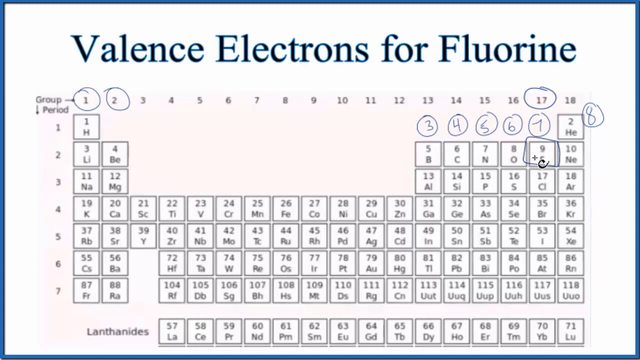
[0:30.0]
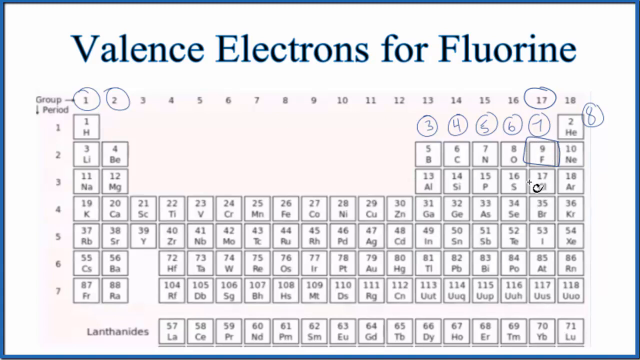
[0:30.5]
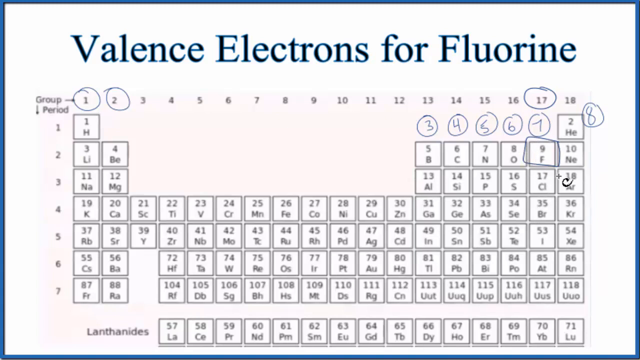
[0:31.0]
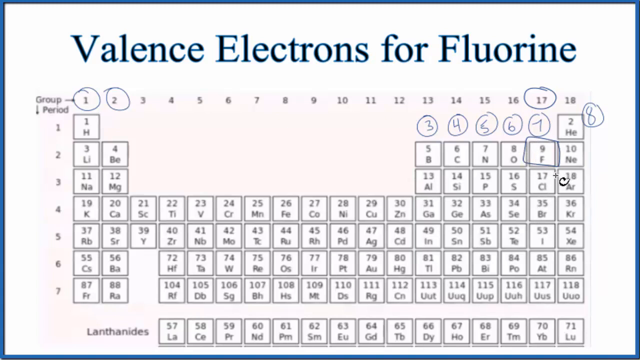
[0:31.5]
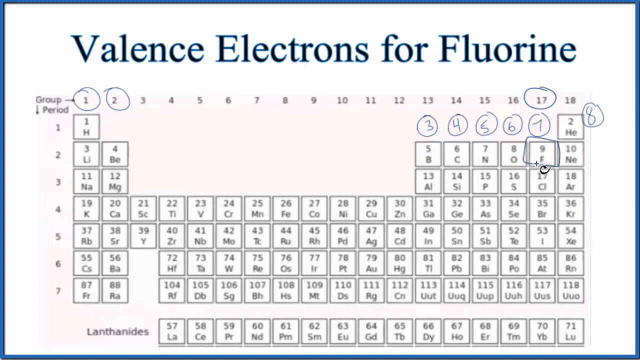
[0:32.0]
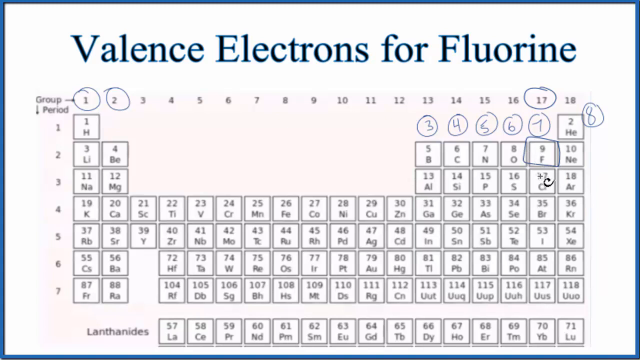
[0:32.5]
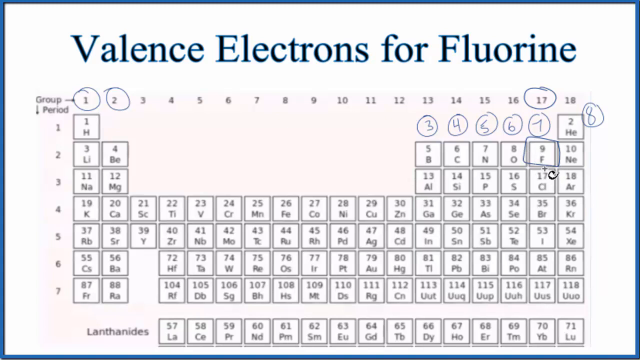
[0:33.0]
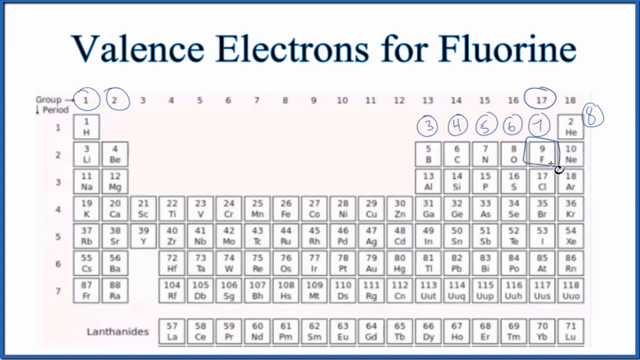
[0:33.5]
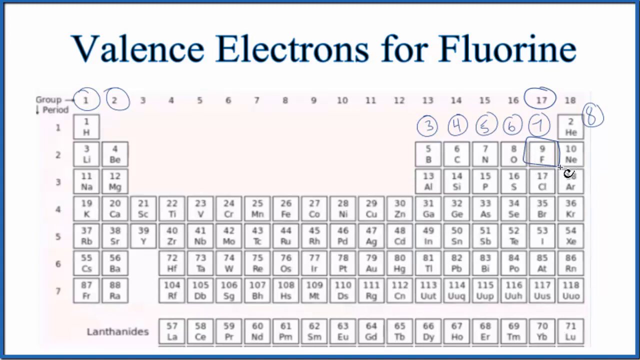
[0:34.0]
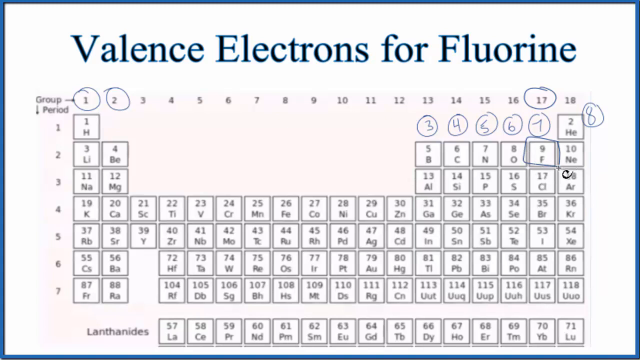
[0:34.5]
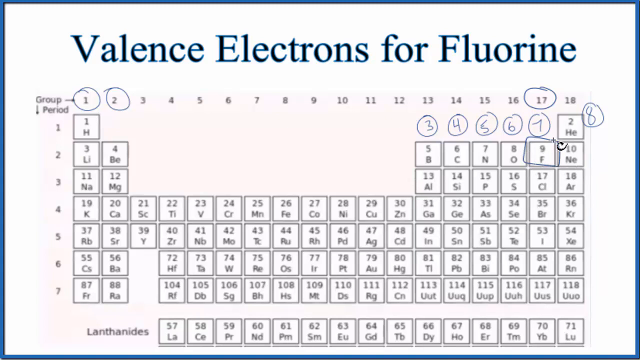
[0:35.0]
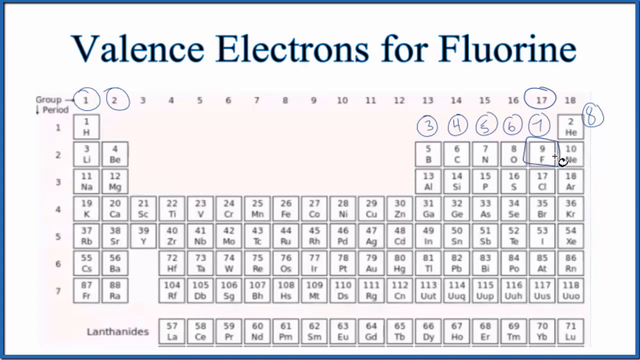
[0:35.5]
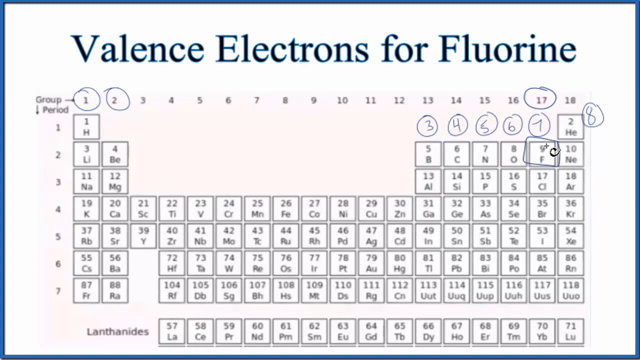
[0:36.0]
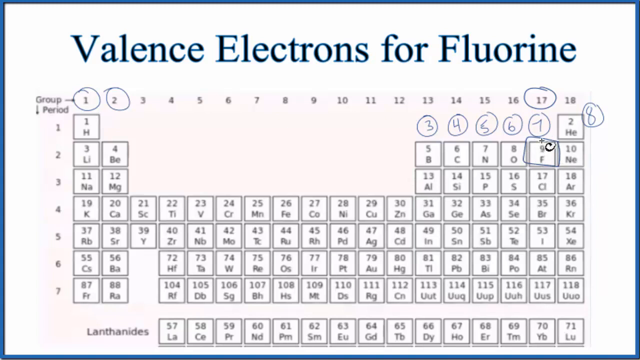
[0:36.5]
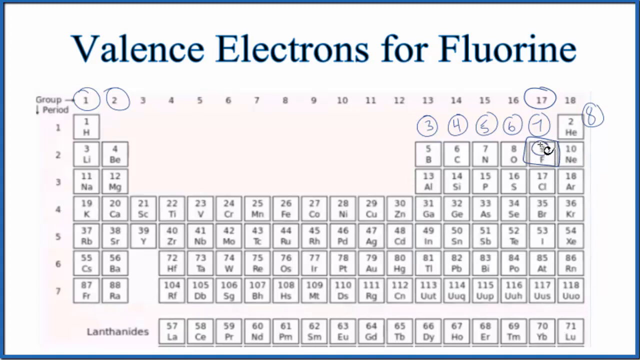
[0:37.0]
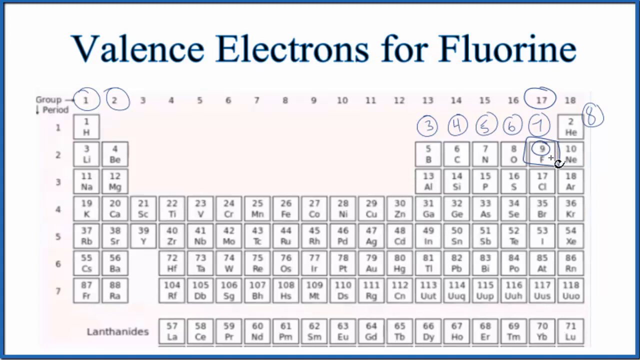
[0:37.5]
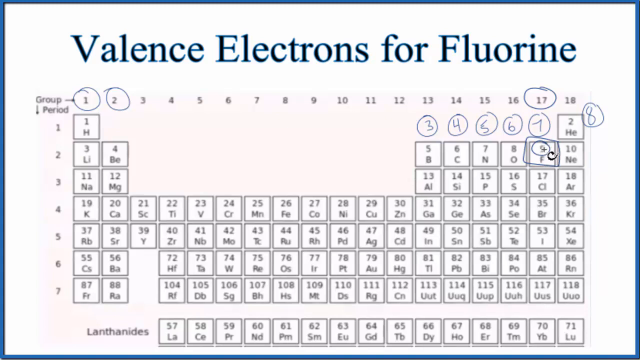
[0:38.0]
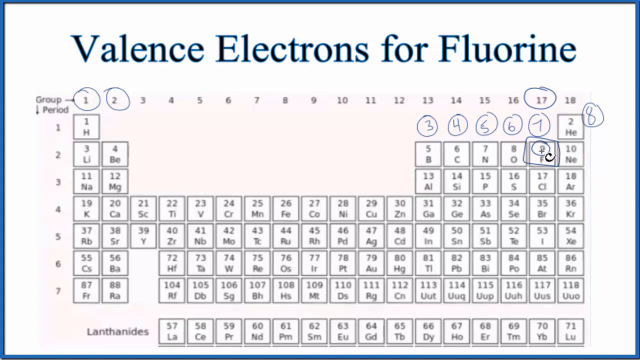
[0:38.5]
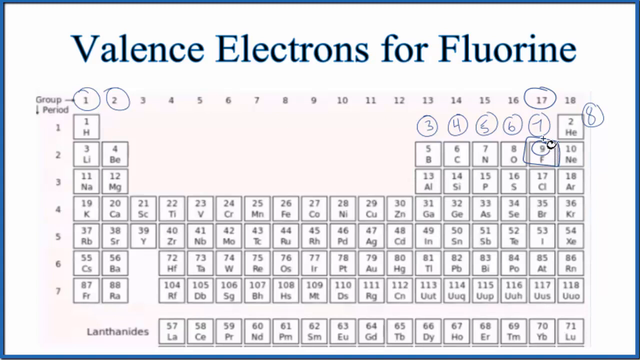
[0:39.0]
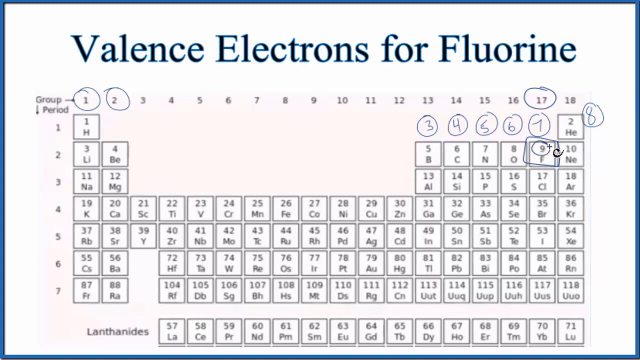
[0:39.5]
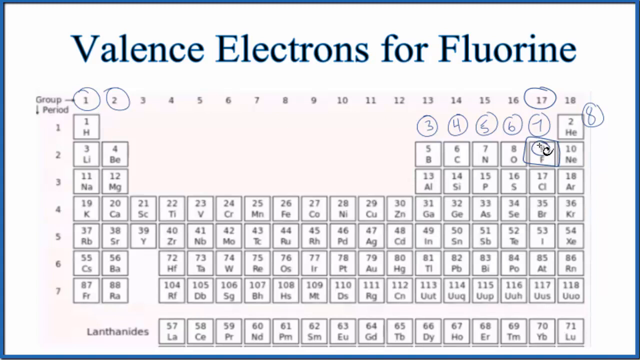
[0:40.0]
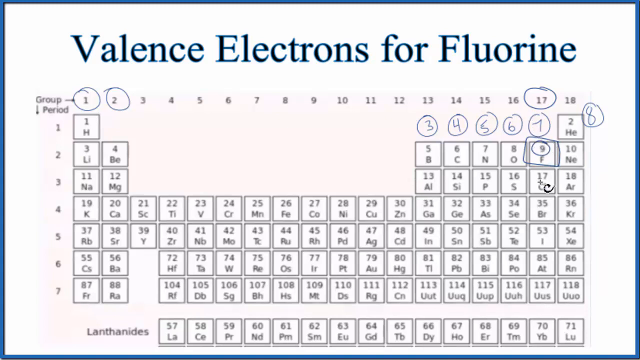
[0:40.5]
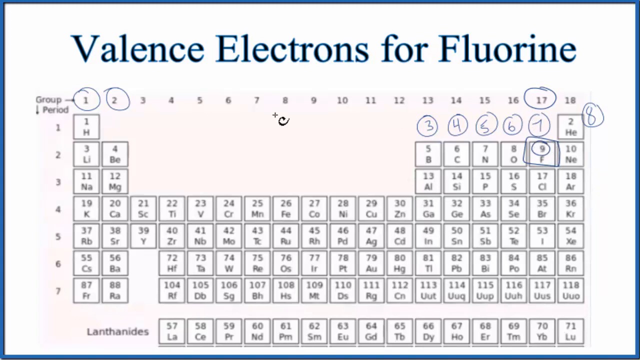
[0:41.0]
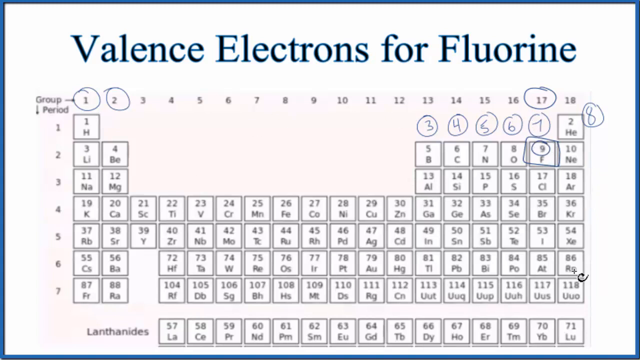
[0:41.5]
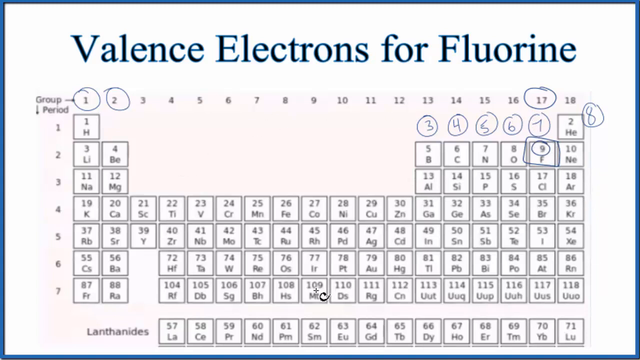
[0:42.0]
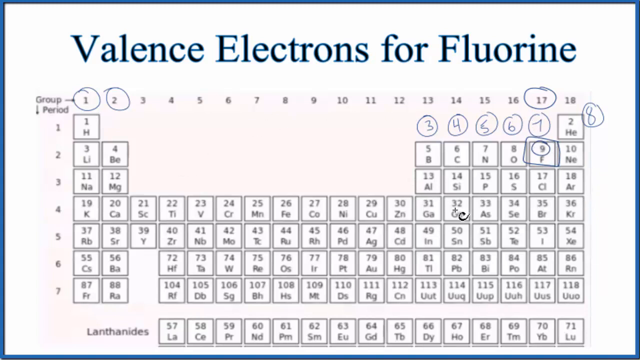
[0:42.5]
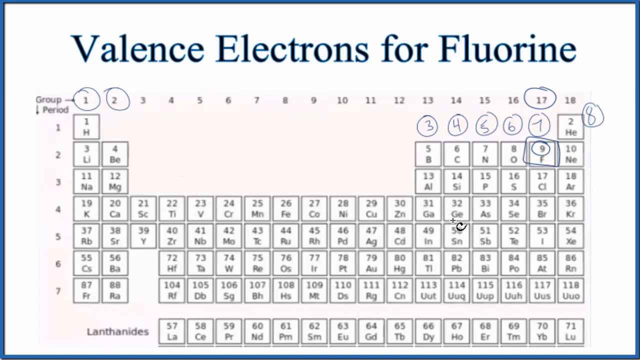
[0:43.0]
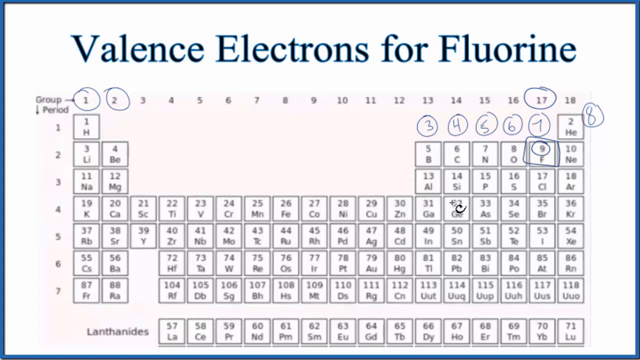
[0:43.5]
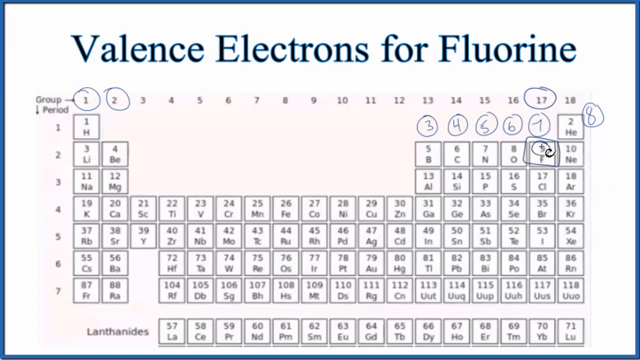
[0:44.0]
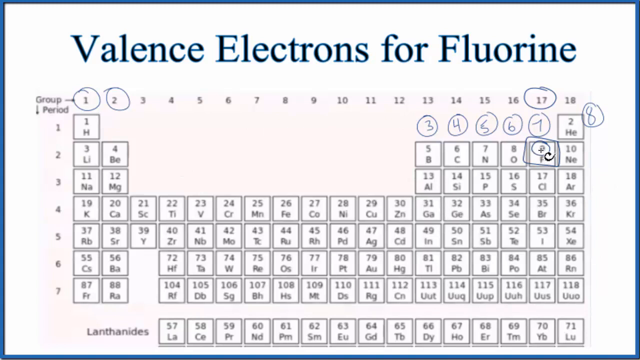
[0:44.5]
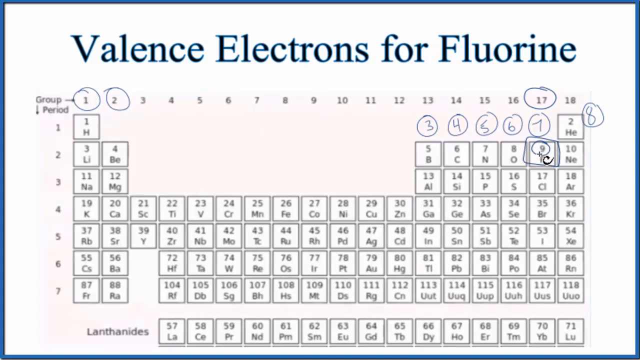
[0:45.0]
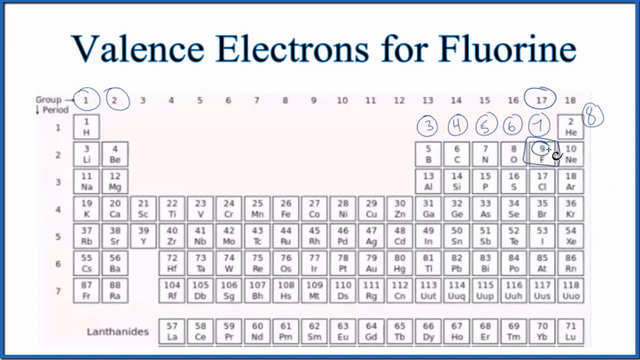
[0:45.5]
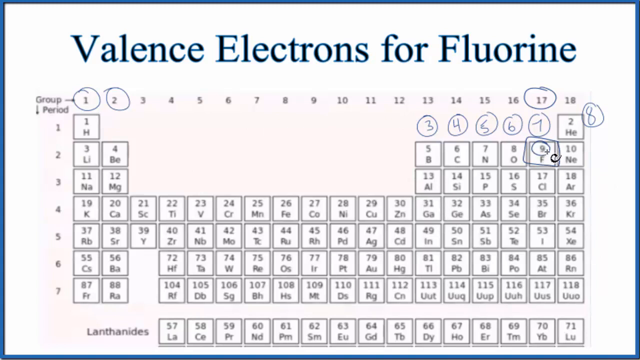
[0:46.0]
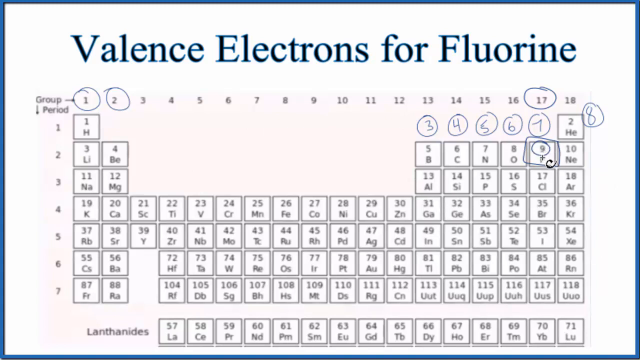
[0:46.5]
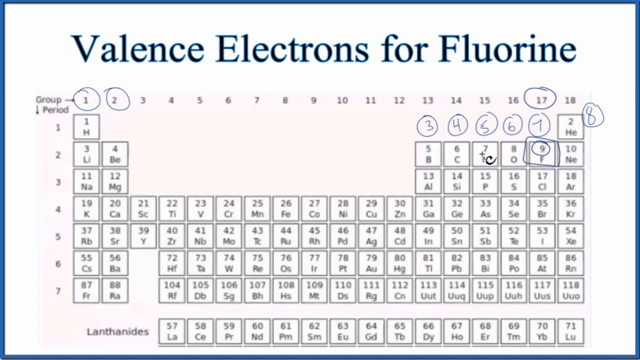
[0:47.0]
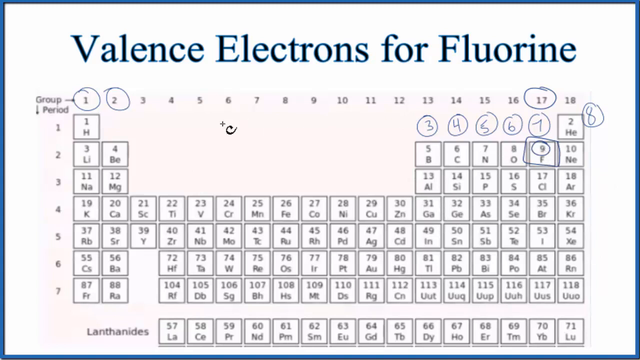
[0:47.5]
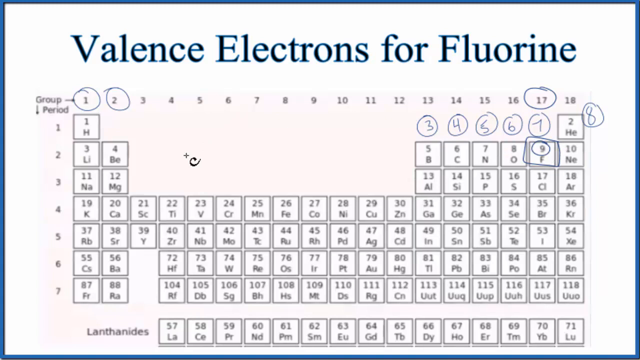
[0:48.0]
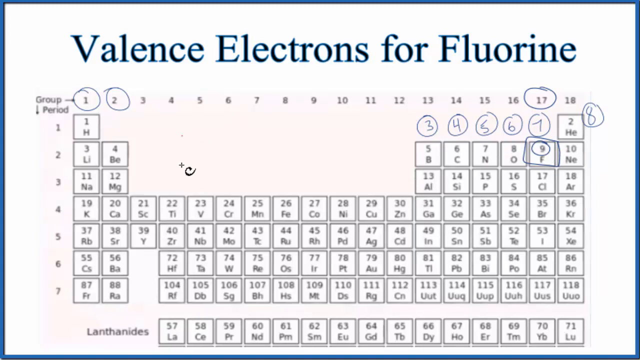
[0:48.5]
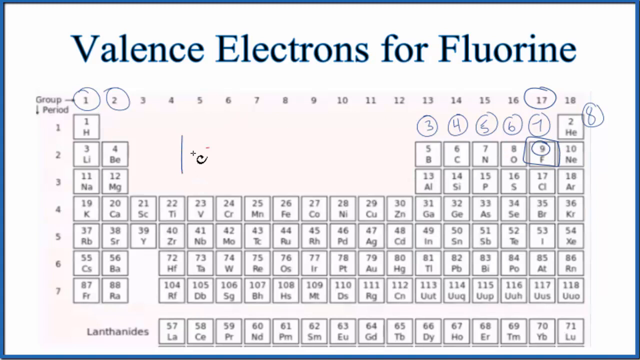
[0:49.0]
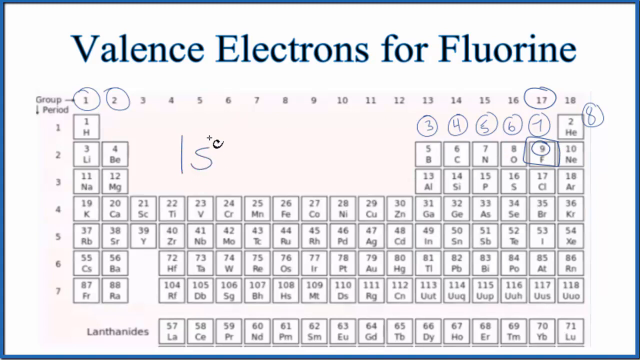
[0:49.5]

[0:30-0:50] The cursor is still pointing toward what appears to be element number 9 on the valence electron chart for fluorine. Element 9 is marked F, most likely the element fluorine. For most of this part the instructor keeps constantly circling element 9, F, on the table. Eventually the cursor moves down to element number 32, circles it a bit, and returns to element 9. The instructor then starts writing something in the center of the screen; it is unclear what, possibly a formula, an atom, or a combination of things, and so far it looks like the number 15.